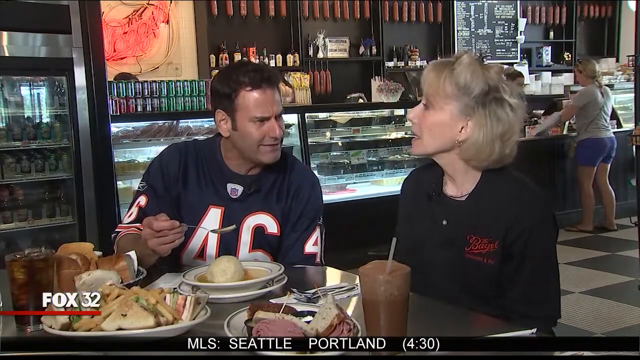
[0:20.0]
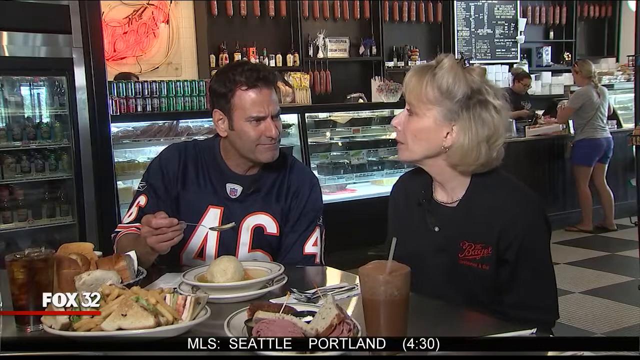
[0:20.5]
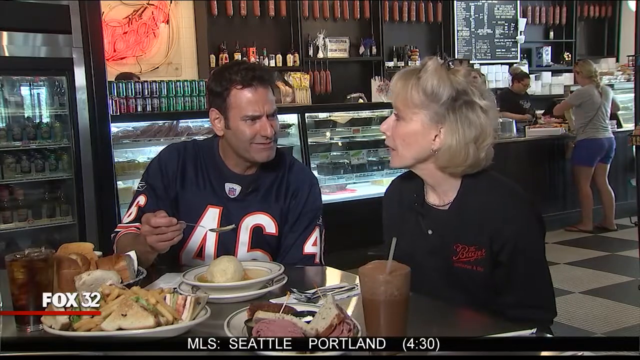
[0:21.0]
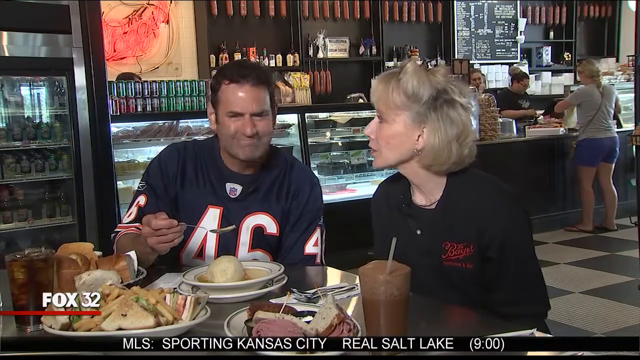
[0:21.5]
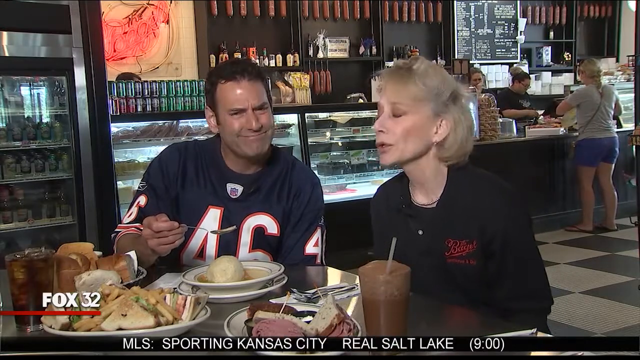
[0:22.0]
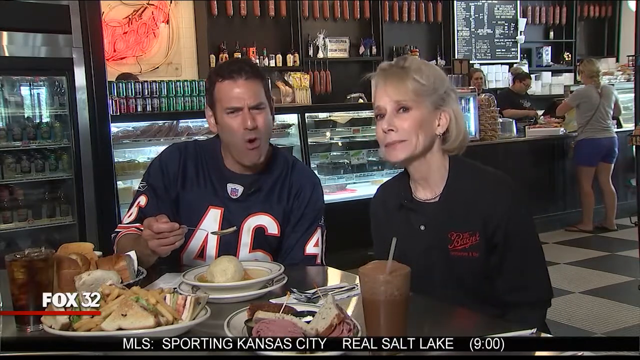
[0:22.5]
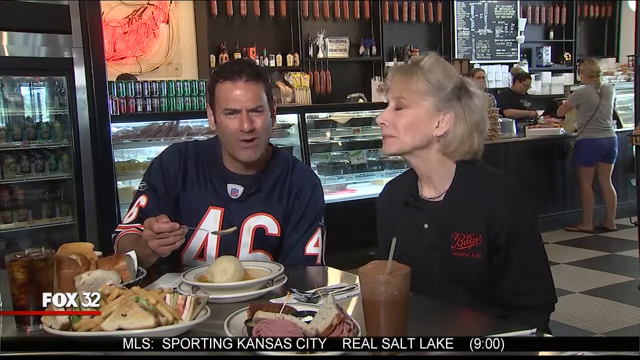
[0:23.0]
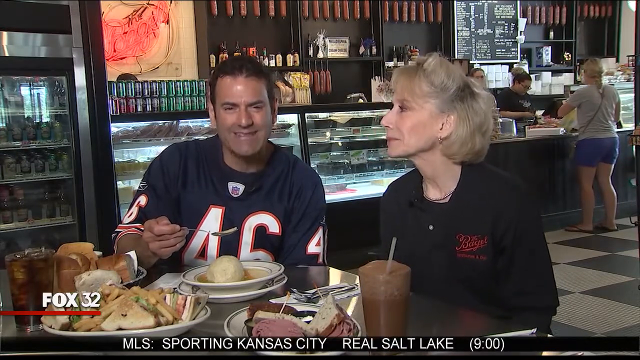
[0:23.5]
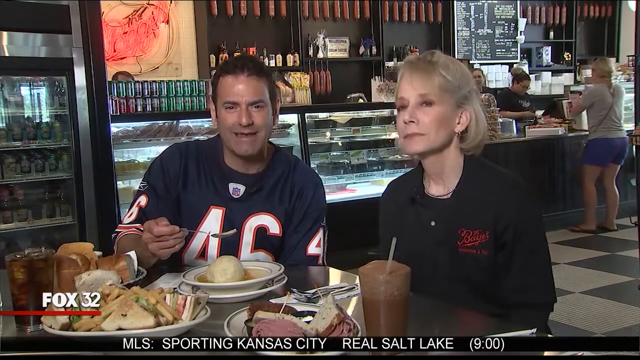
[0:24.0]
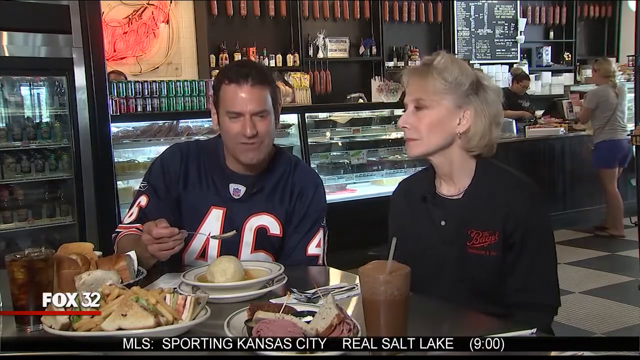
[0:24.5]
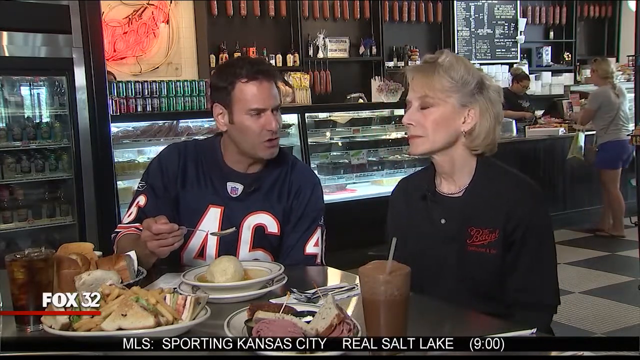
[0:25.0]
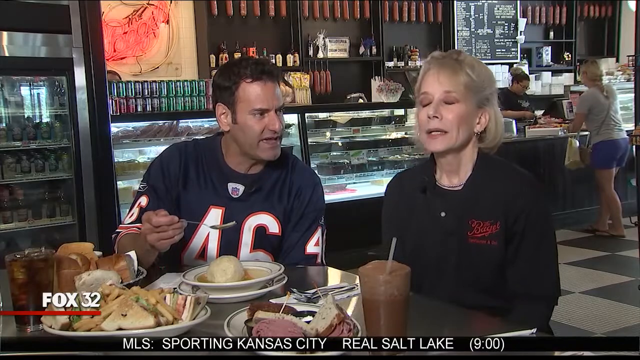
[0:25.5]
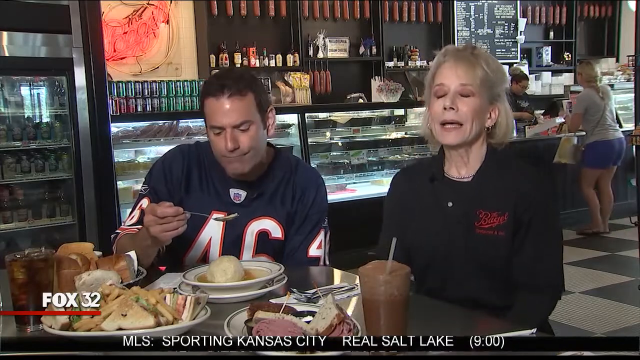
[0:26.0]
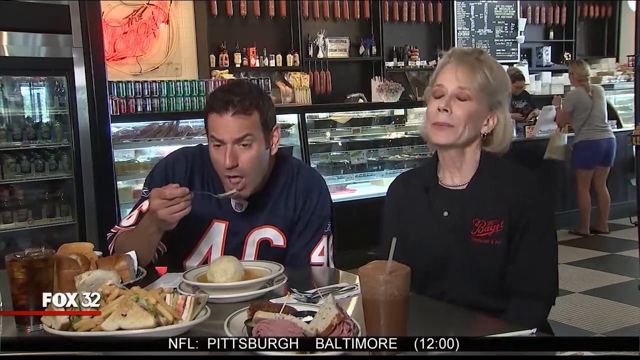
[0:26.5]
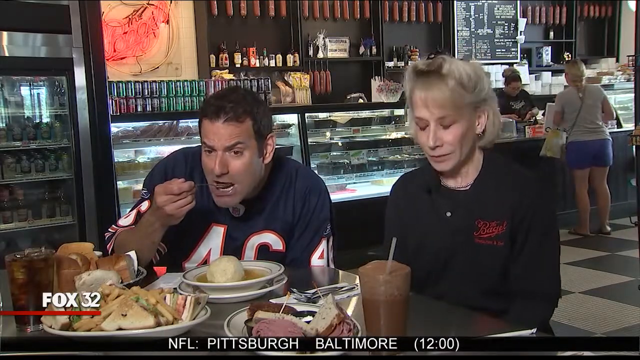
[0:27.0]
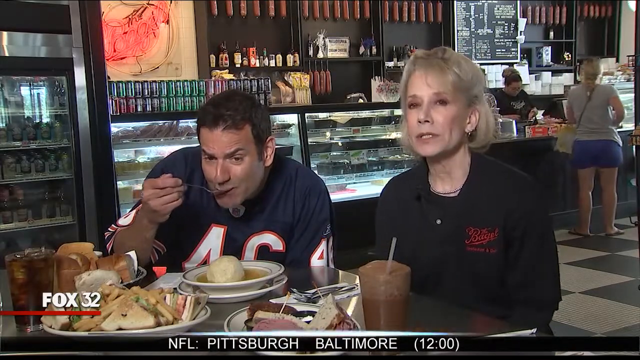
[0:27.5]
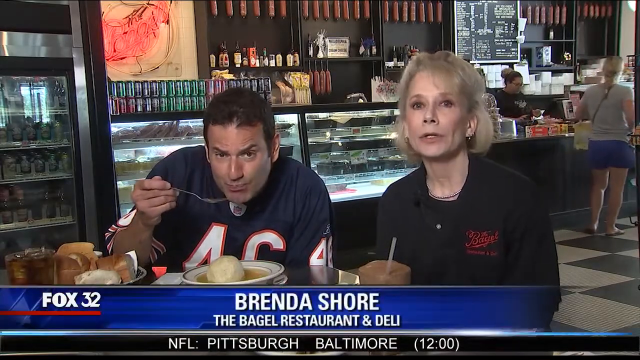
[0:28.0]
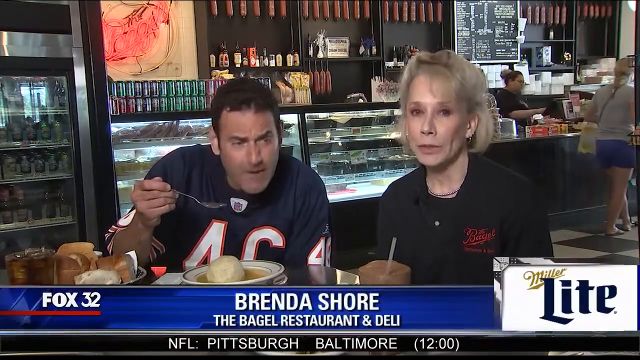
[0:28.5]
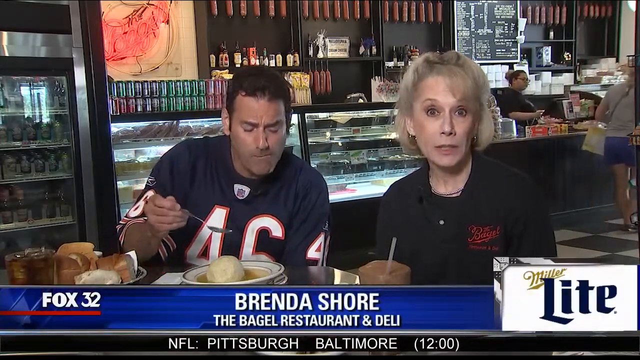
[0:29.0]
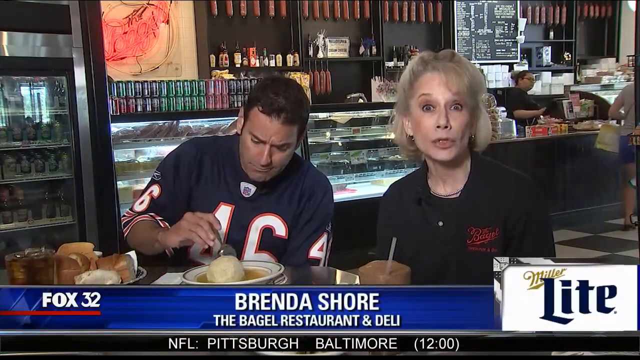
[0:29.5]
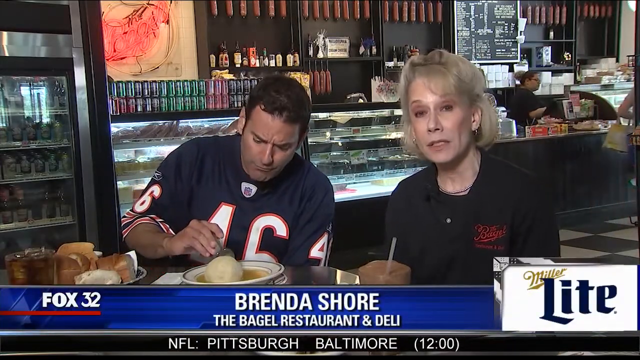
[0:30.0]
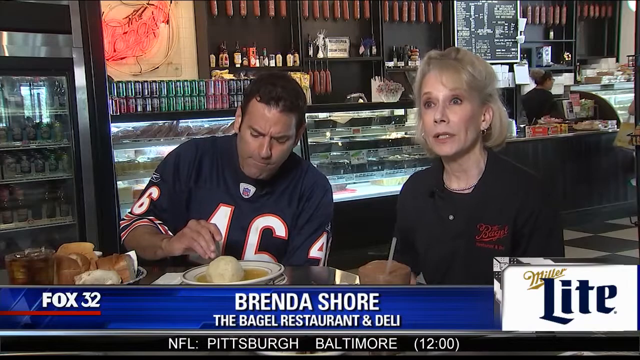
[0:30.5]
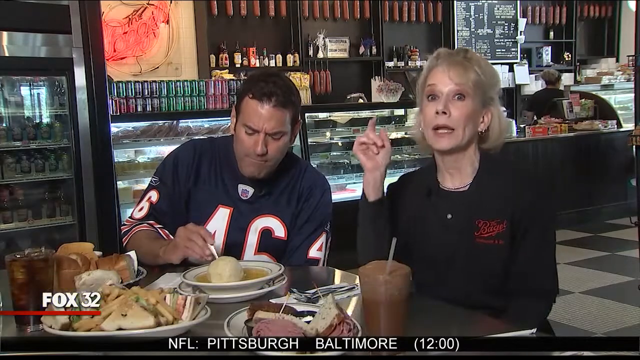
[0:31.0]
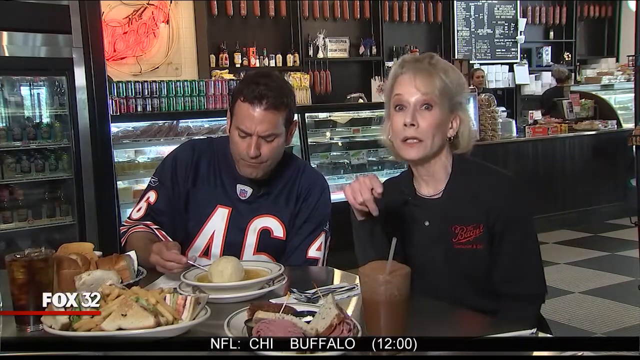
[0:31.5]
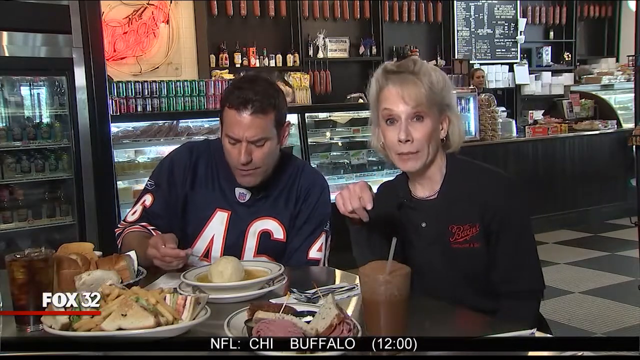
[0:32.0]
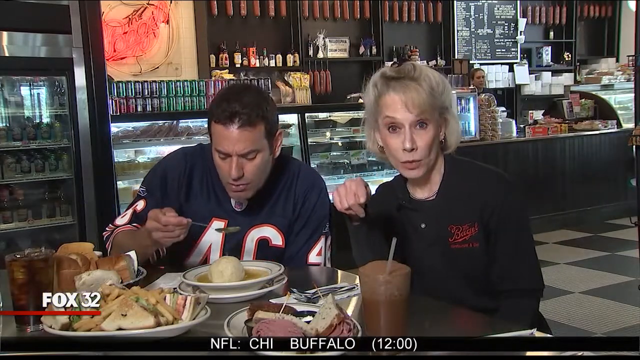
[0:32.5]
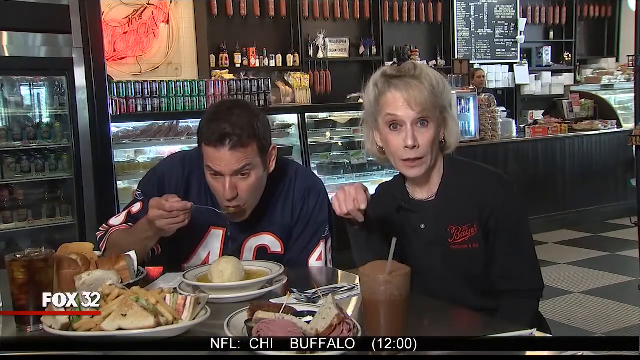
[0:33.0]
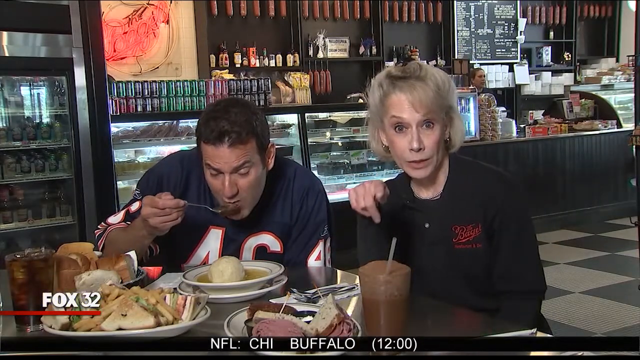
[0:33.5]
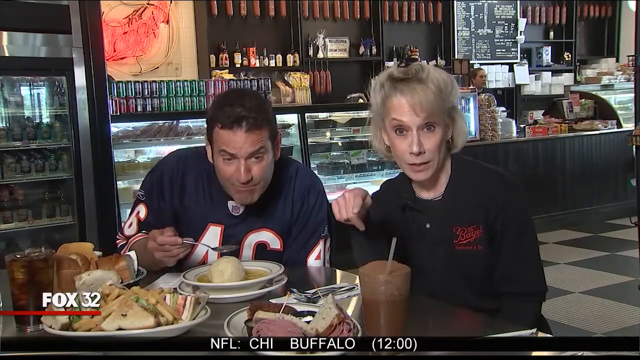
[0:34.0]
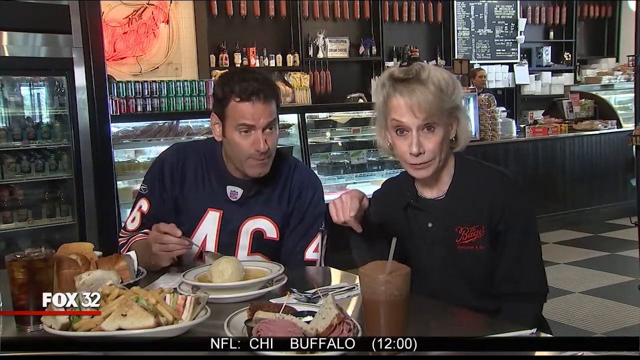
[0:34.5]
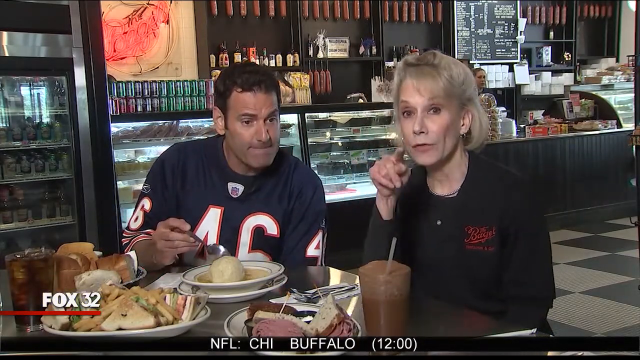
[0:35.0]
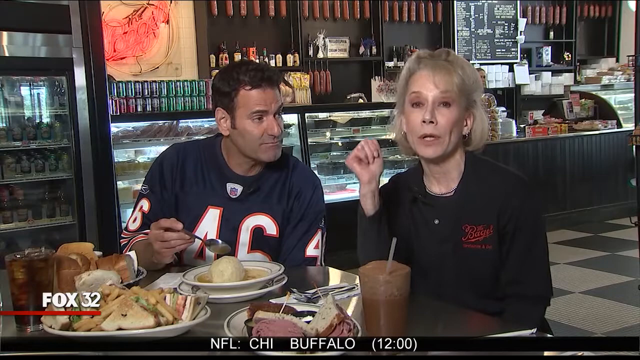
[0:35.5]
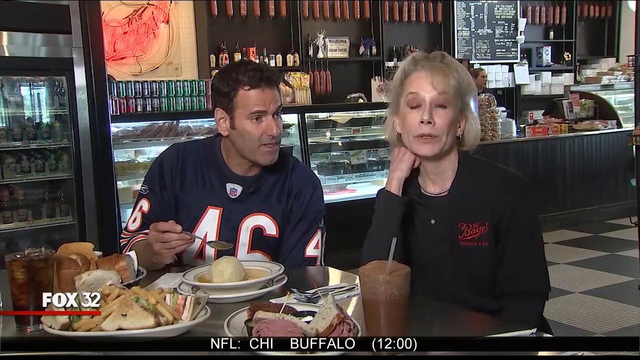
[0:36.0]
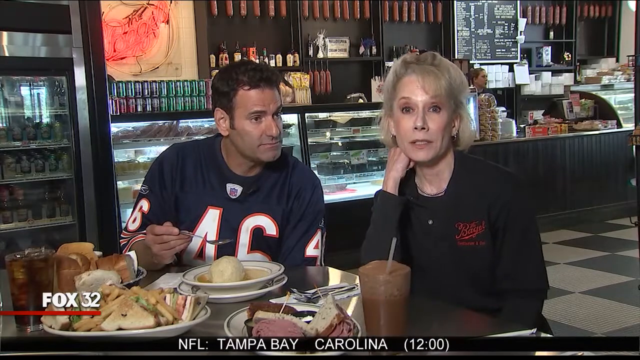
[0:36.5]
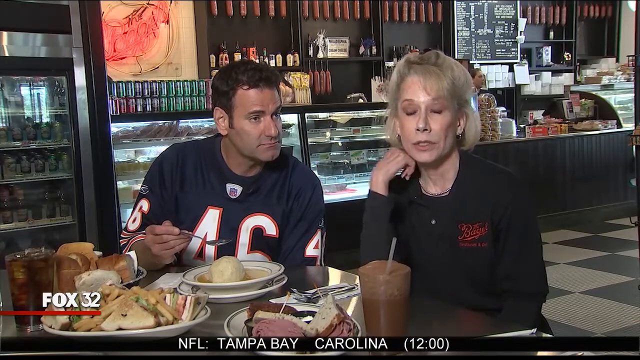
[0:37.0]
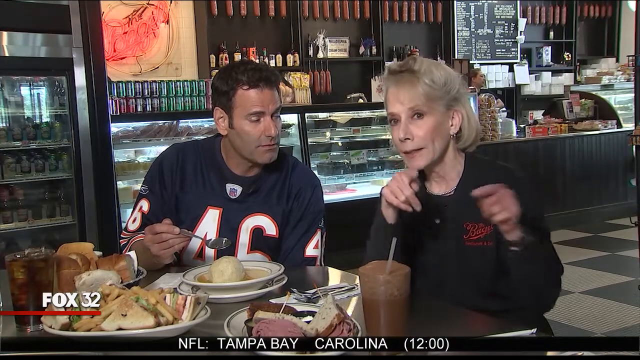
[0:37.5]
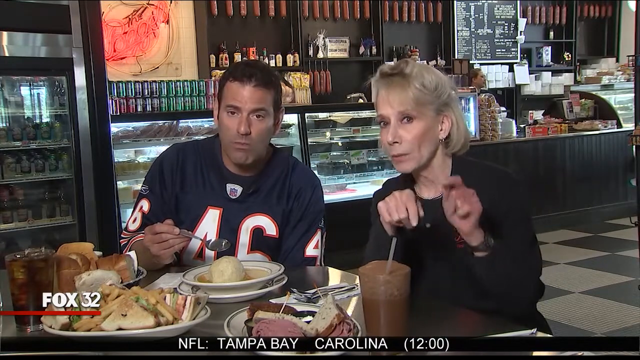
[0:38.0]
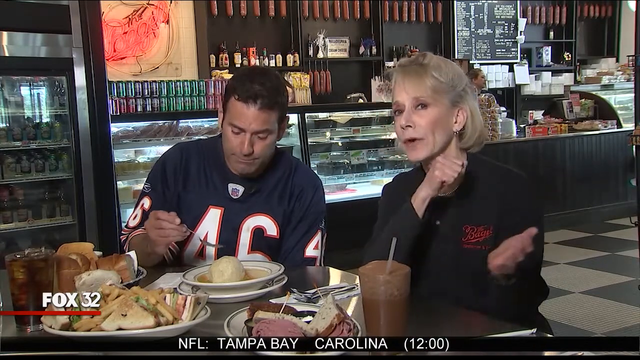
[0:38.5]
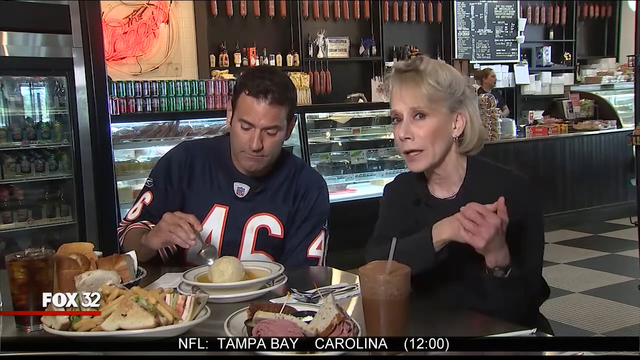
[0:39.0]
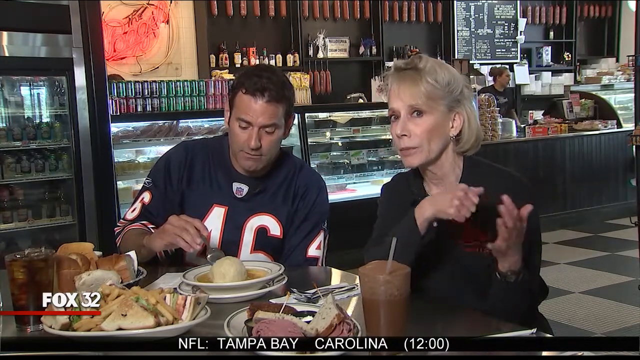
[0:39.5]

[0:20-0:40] Two people sit in a restaurant. The man on the left wears a navy blue jersey with the number 46 on the front and on the sleeves, and he is eating some food. The woman on the right has short white hair and appears to be wearing a black chef uniform with some text stitched on the right. They talk to each other and to the camera, nodding as they speak, and both have mics clipped to the front of their t-shirts. The man keeps eating as they talk. In the background there is a counter with someone at the till, so they seem to be in some kind of cafe or restaurant. A box at the bottom of the screen reads "Brenda Shaw, The Bagel and Restaurant."